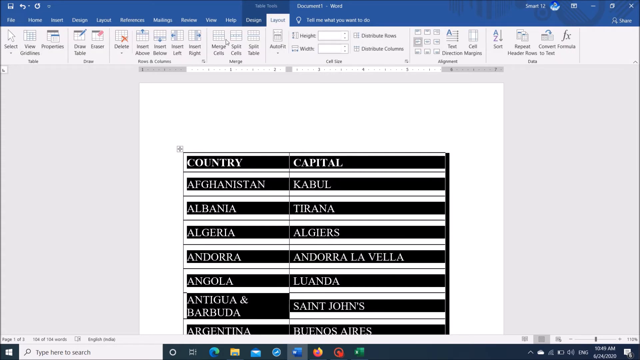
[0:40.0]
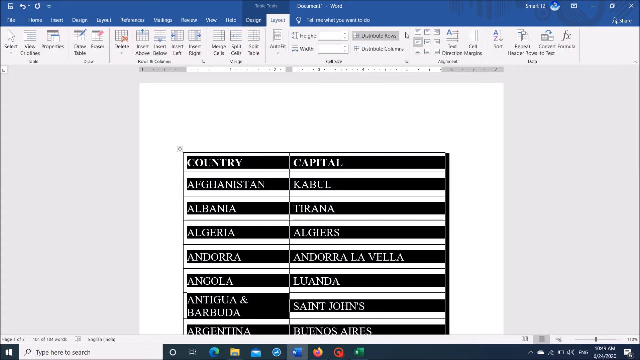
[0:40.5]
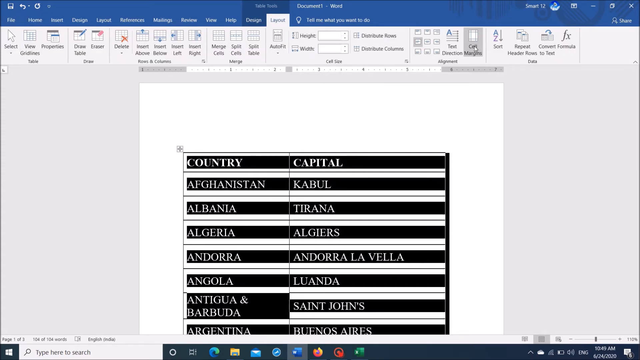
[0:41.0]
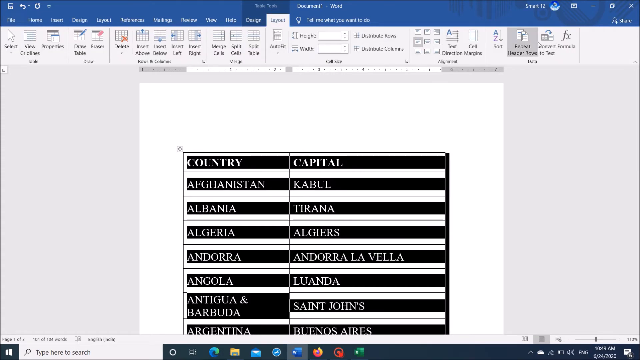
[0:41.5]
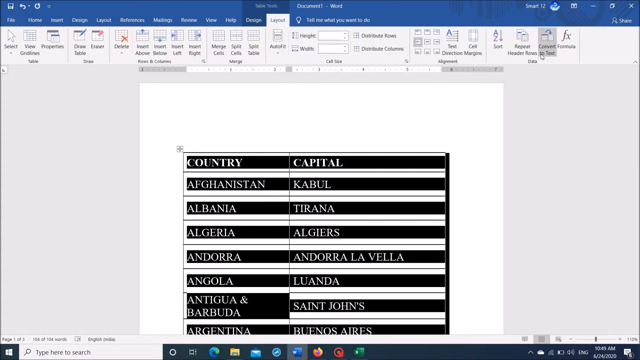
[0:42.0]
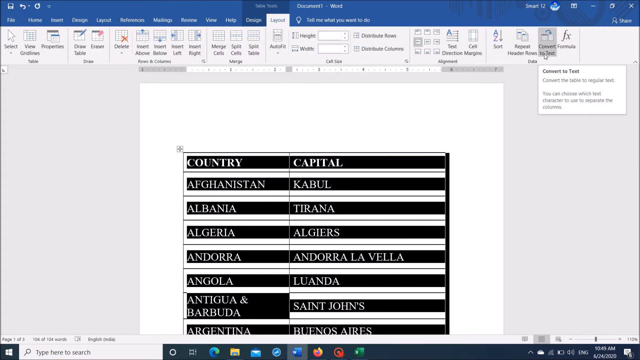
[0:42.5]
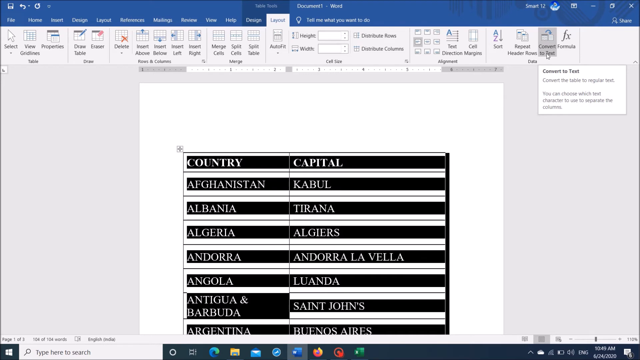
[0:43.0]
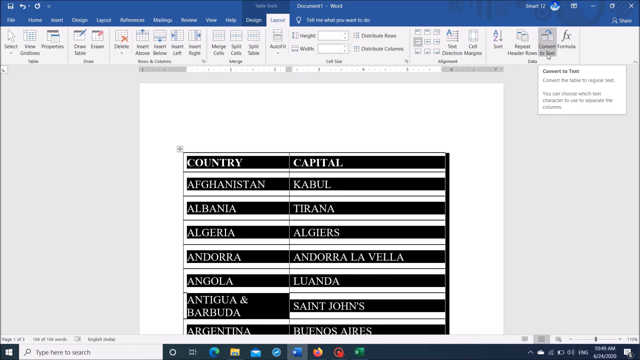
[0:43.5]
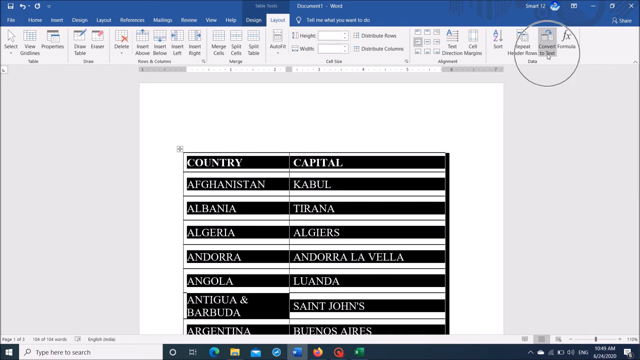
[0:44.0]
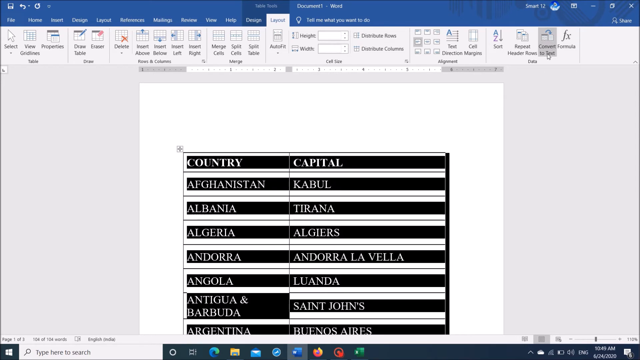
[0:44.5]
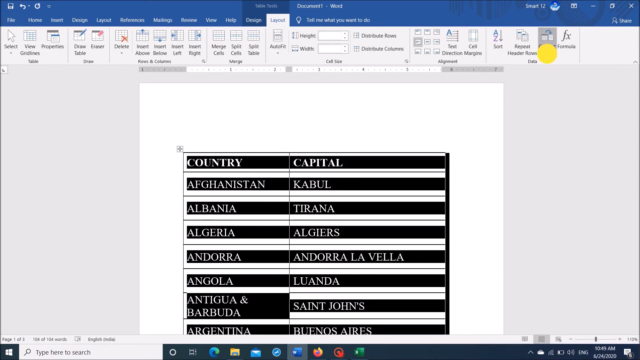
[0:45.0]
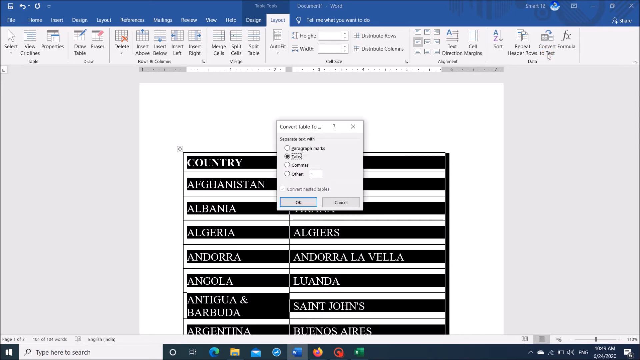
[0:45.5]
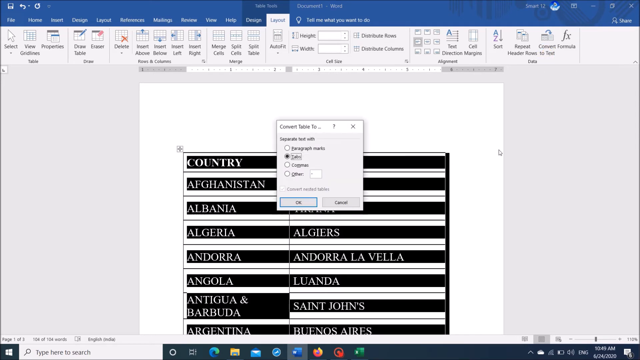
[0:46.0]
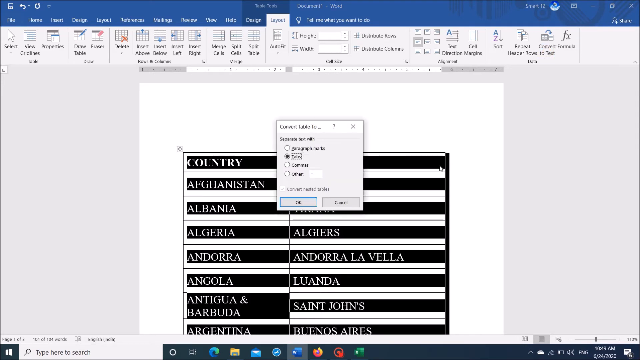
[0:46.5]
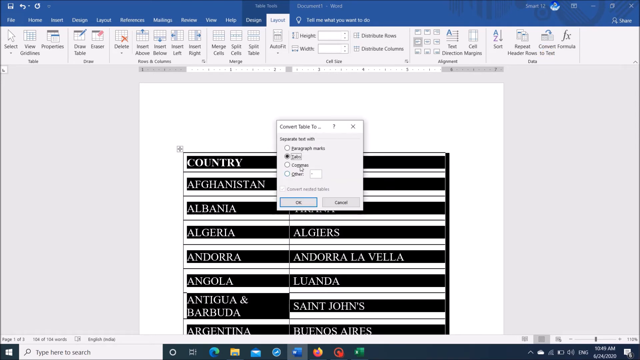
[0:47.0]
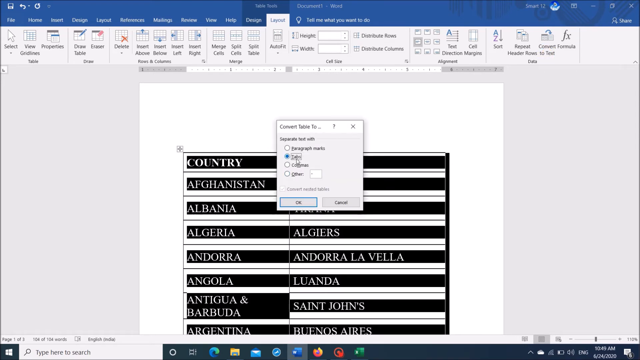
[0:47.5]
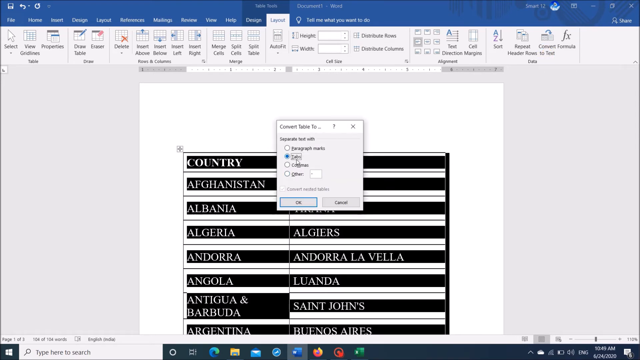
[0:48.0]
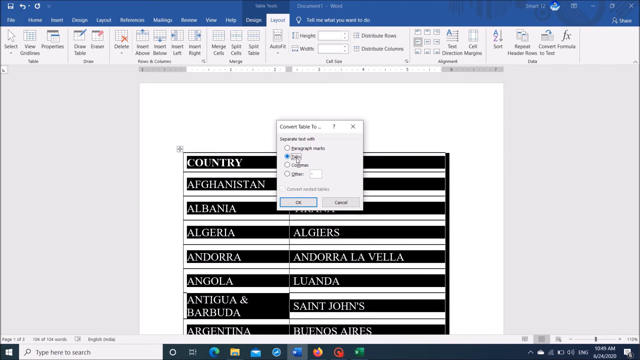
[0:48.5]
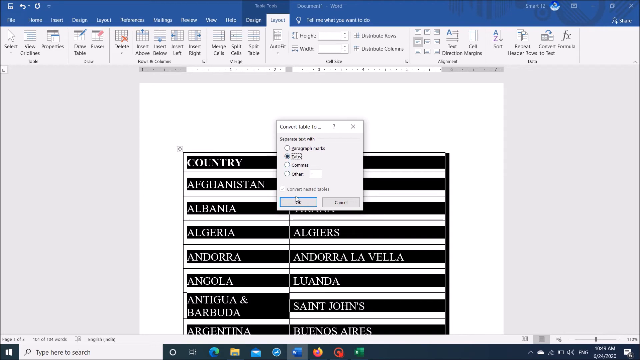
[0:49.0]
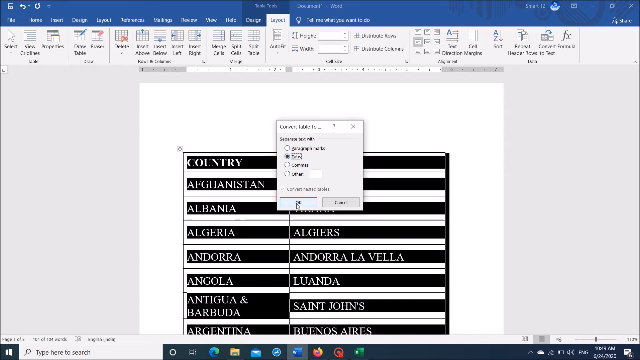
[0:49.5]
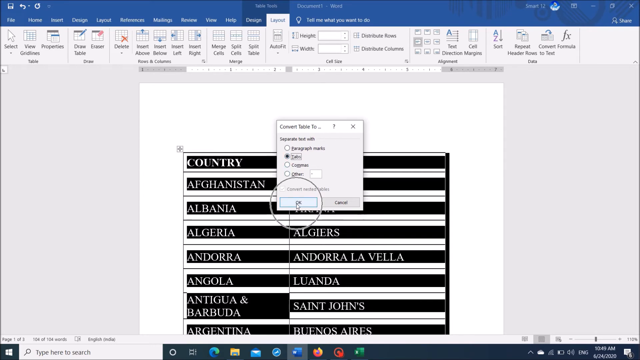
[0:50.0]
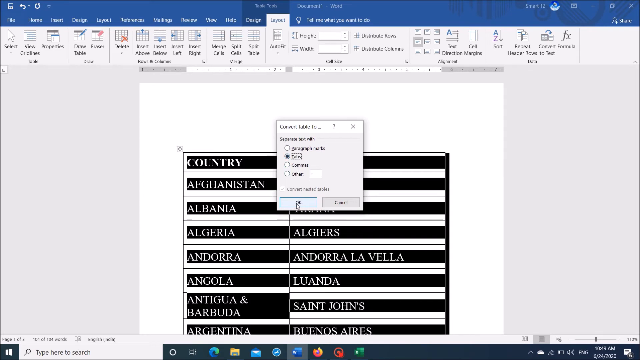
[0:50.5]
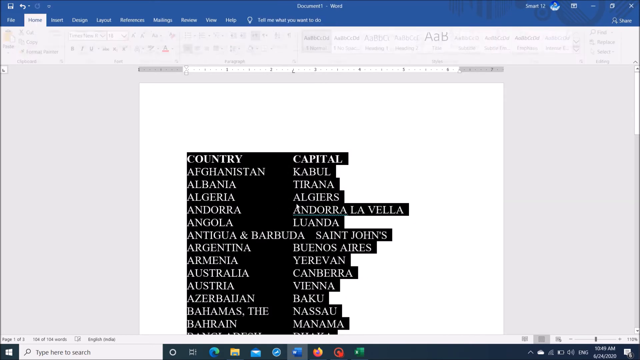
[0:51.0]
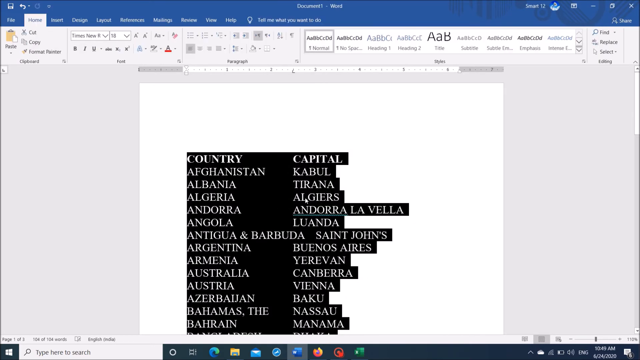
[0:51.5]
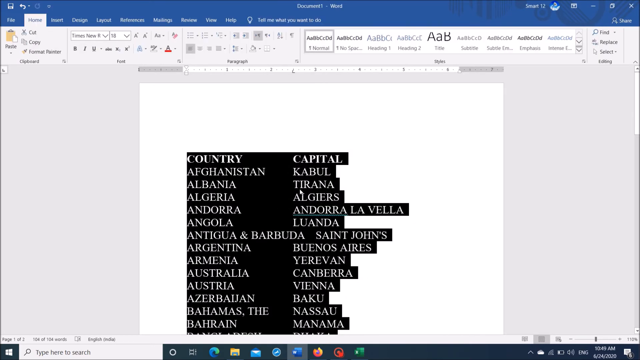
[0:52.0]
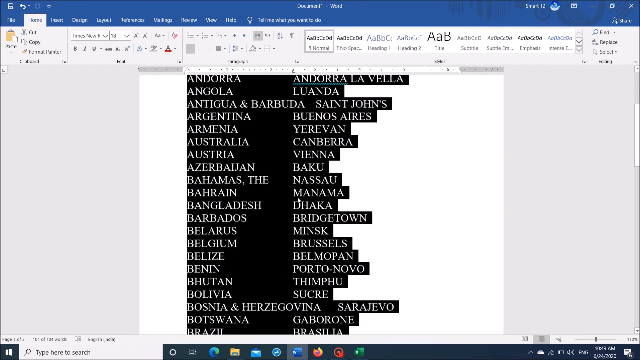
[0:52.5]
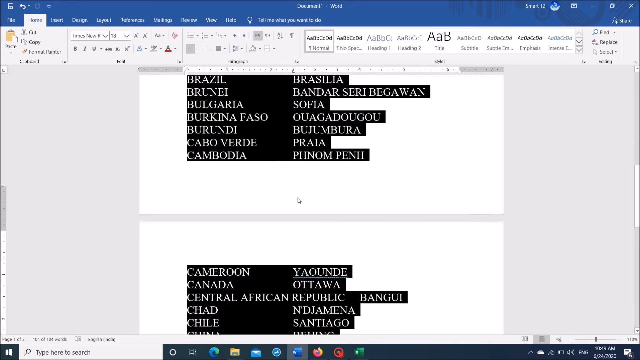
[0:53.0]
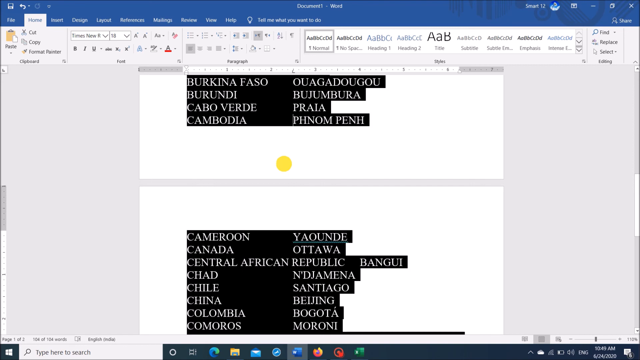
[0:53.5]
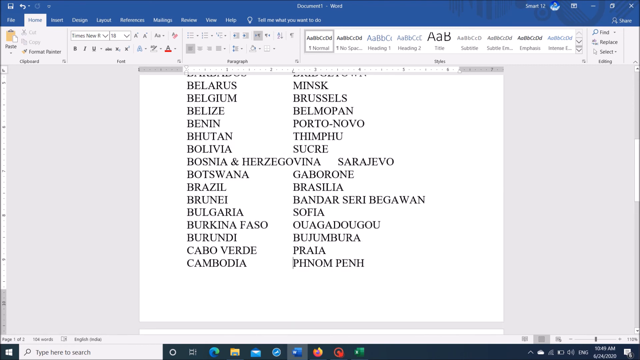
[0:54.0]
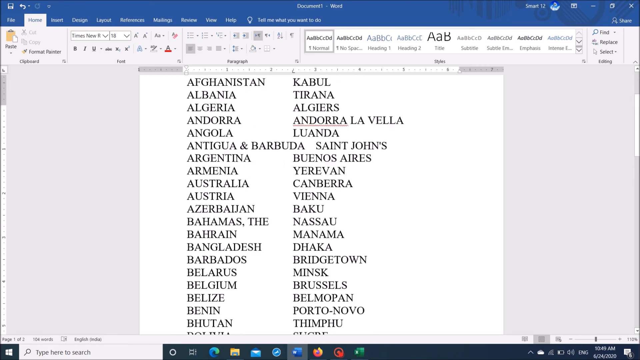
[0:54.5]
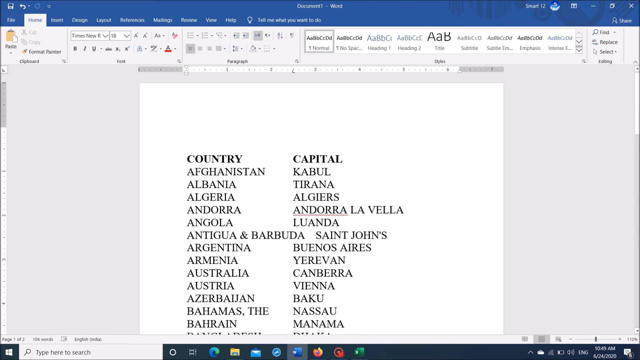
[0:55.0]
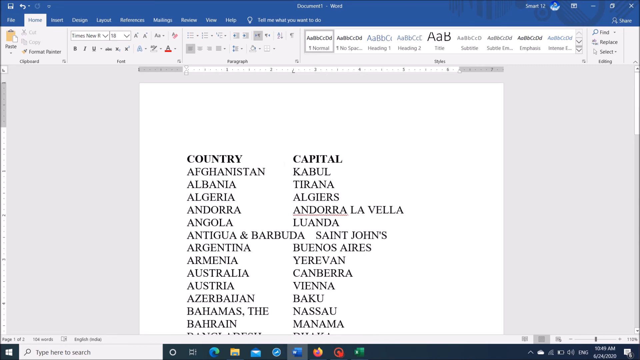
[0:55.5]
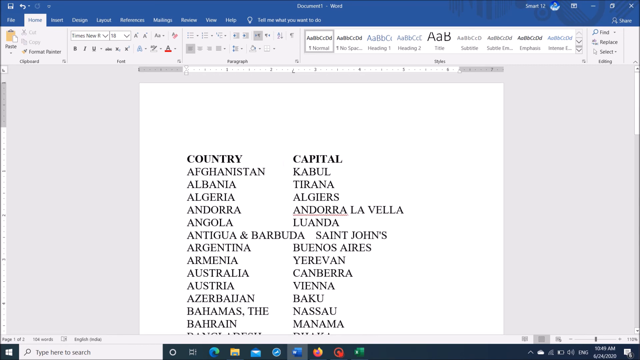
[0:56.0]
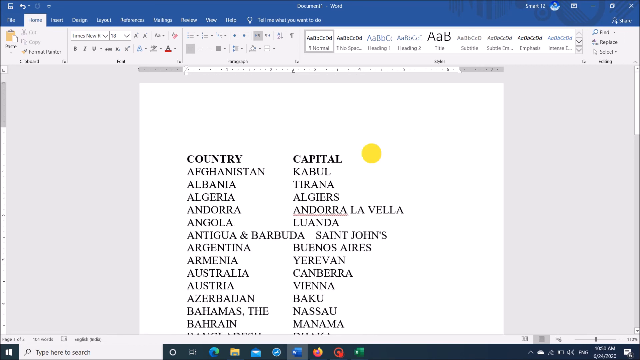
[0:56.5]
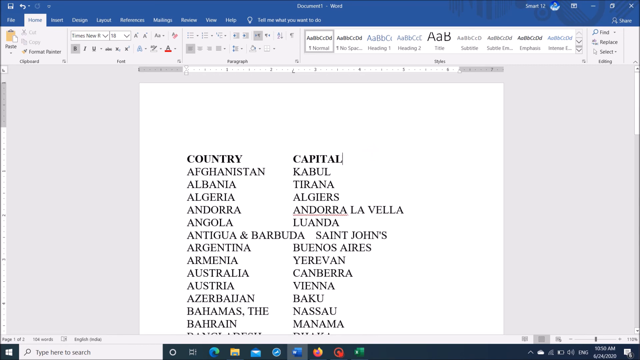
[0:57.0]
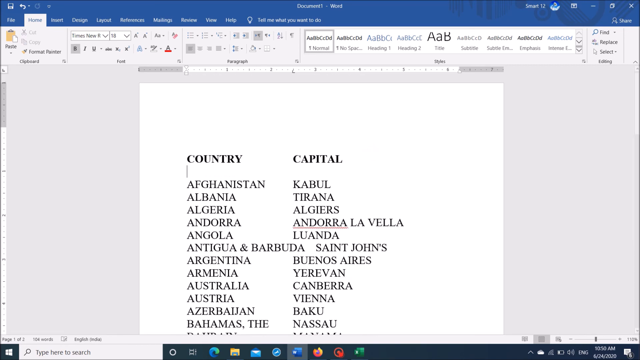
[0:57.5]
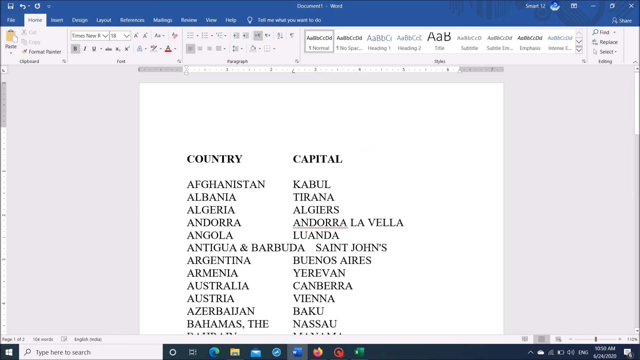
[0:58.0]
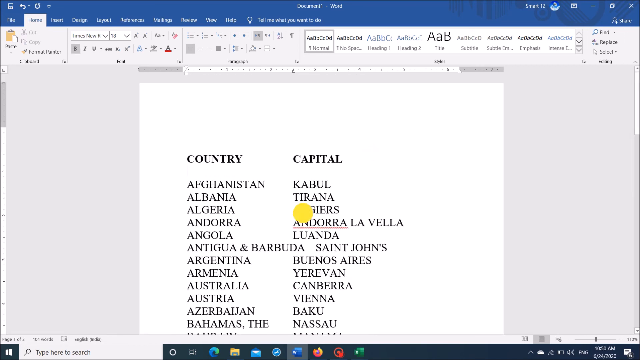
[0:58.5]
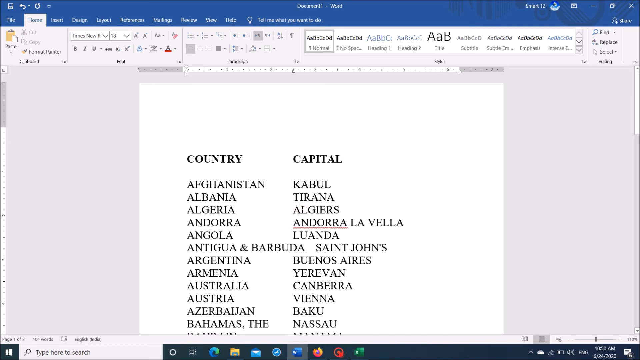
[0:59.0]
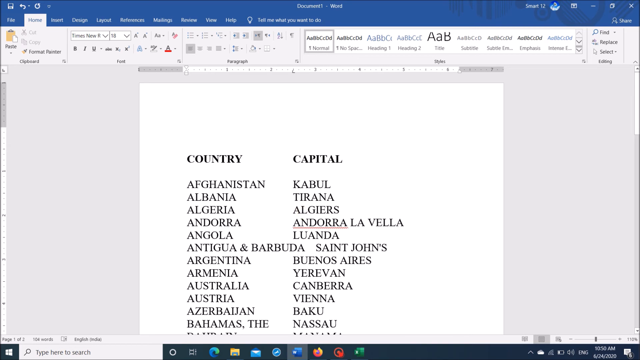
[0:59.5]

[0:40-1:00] The document is still in Microsoft Word. The columns are highlighted in black, probably because the whole section has been selected. The person moves towards the layout and clicks on convert to text, and appears to choose a handwriting. They press the OK button and the columns disappear; the content is no longer in column form but in list form. A space is left between the word country and the names of the countries, and between the word capital and the names of the capitals. The words country and capital are made bold.